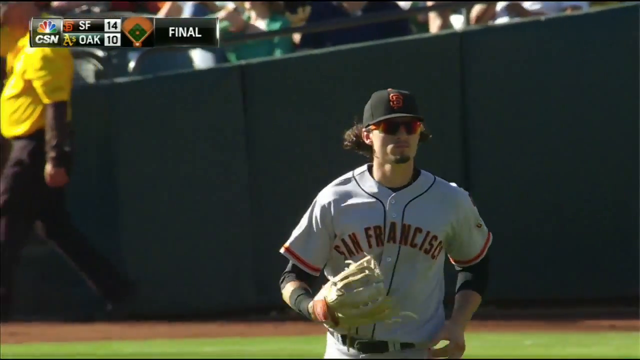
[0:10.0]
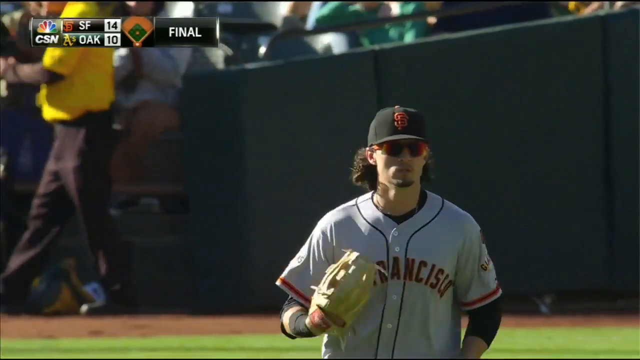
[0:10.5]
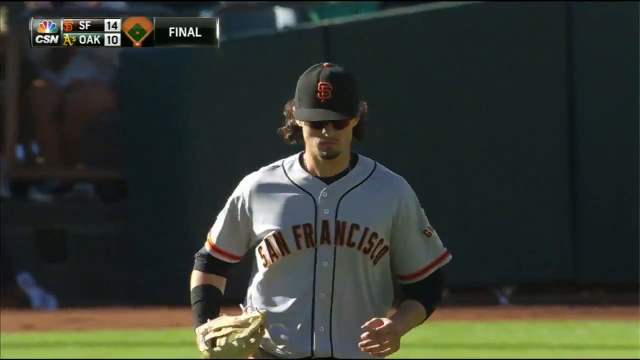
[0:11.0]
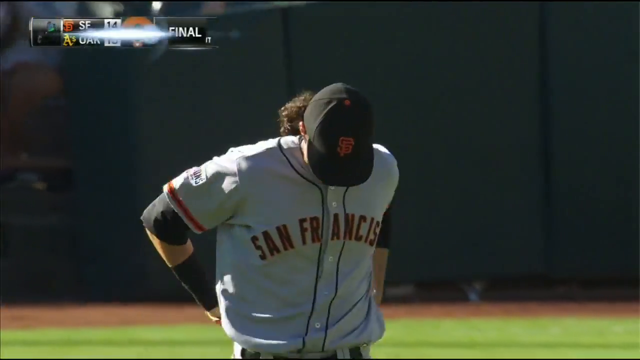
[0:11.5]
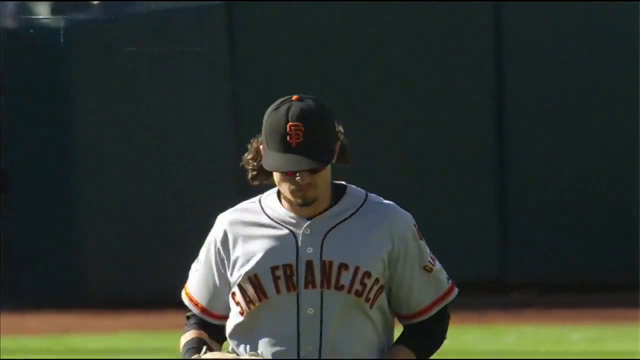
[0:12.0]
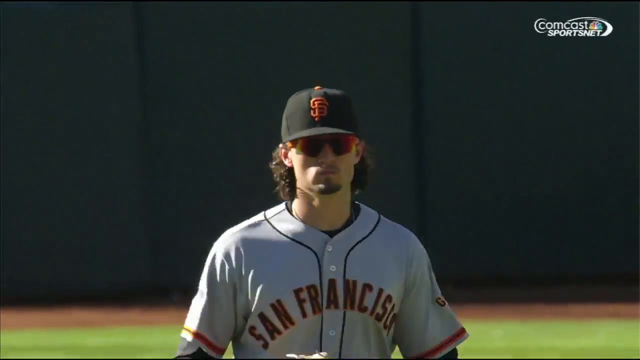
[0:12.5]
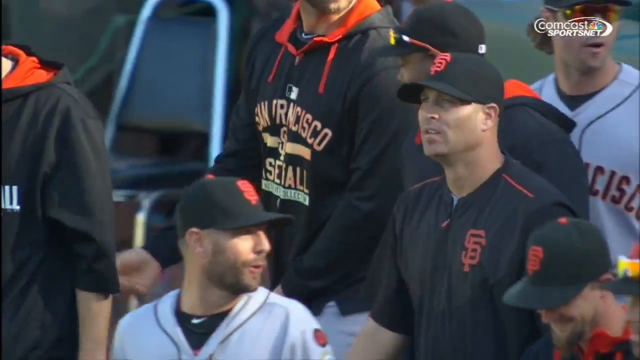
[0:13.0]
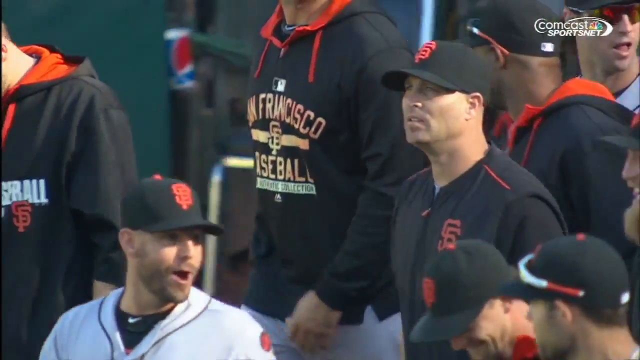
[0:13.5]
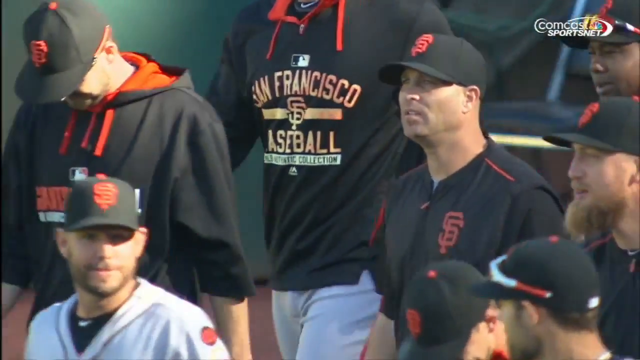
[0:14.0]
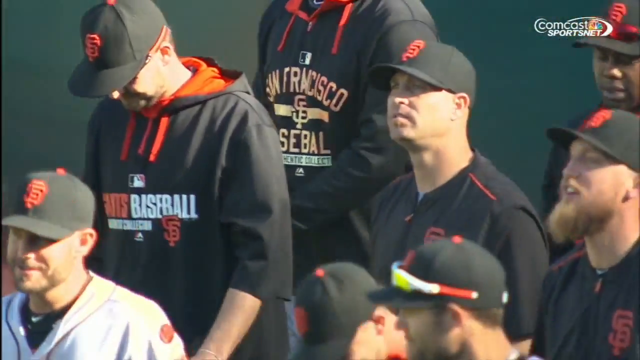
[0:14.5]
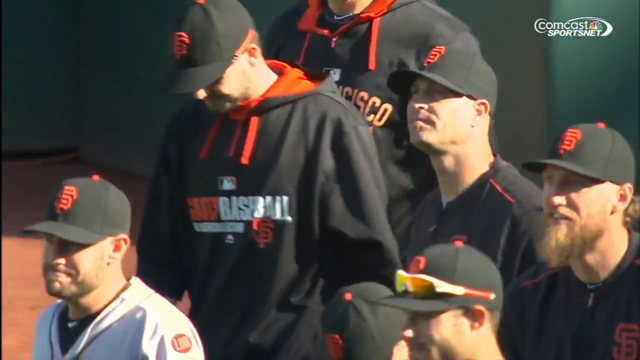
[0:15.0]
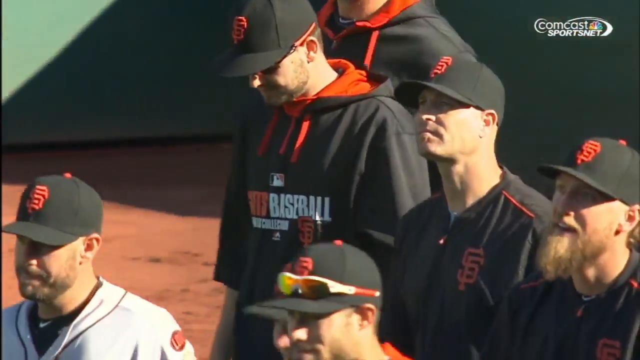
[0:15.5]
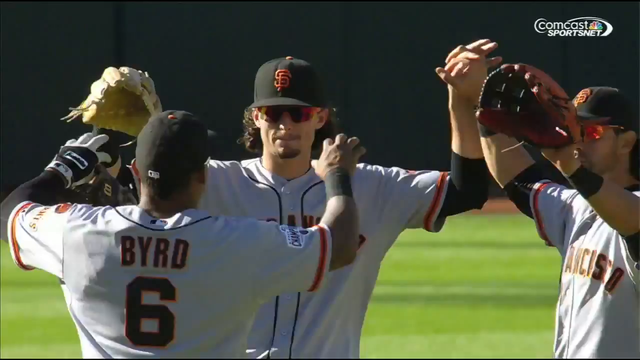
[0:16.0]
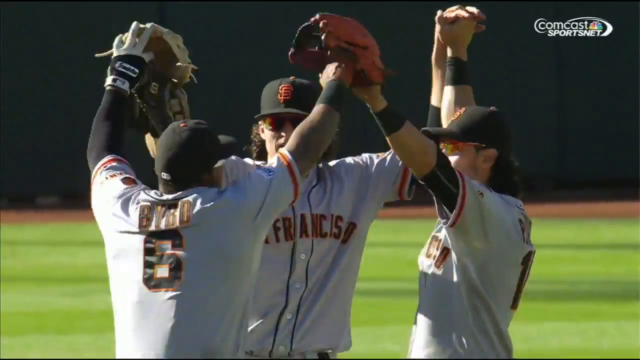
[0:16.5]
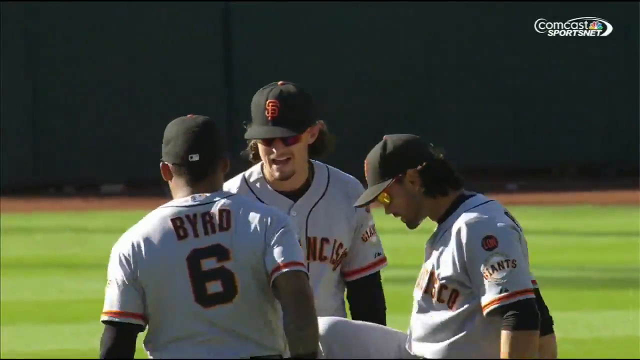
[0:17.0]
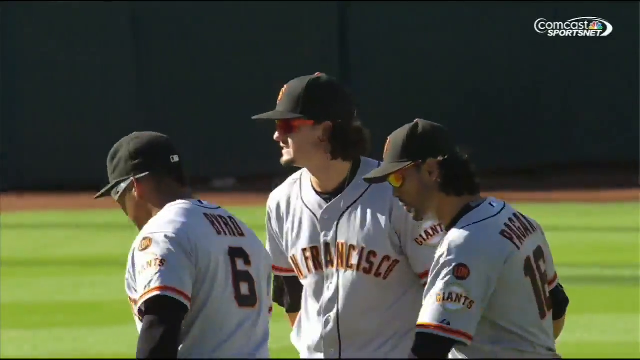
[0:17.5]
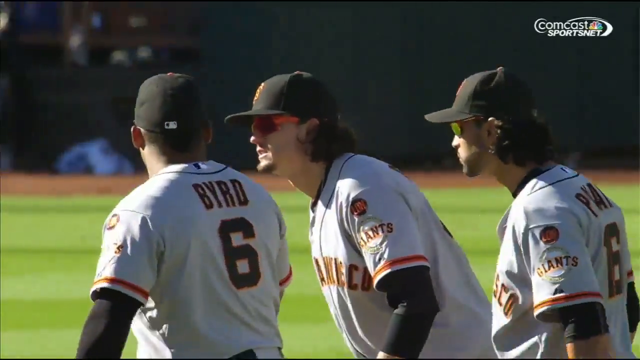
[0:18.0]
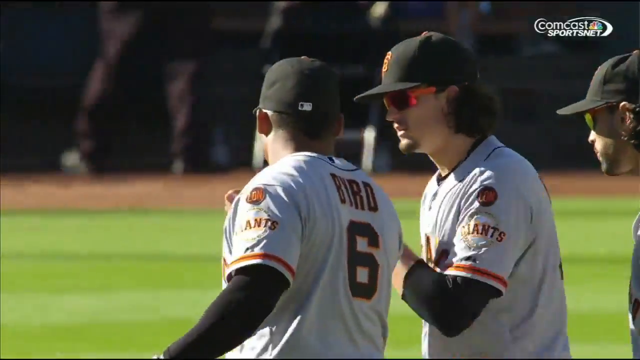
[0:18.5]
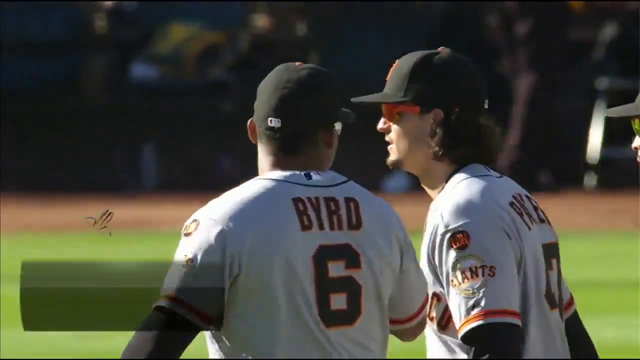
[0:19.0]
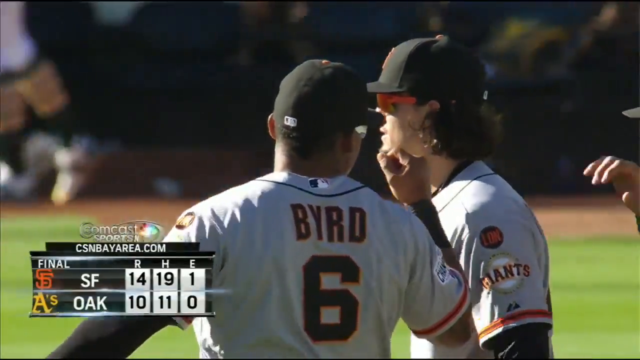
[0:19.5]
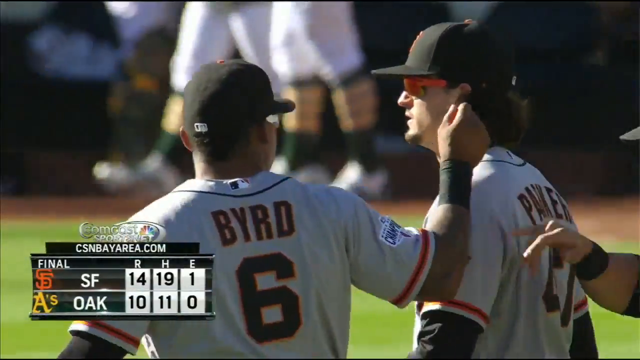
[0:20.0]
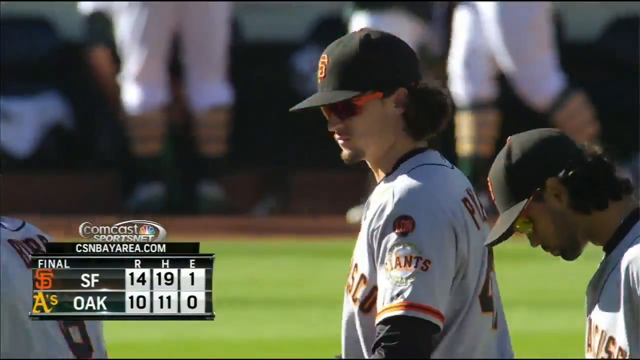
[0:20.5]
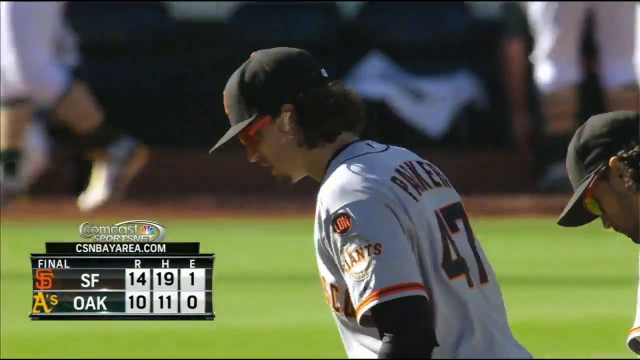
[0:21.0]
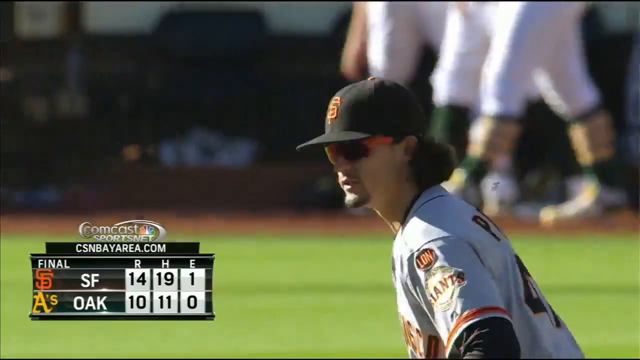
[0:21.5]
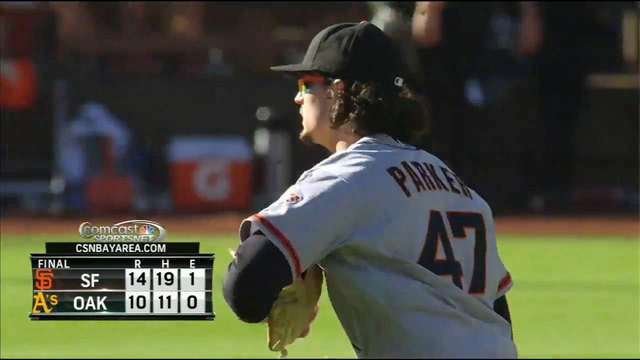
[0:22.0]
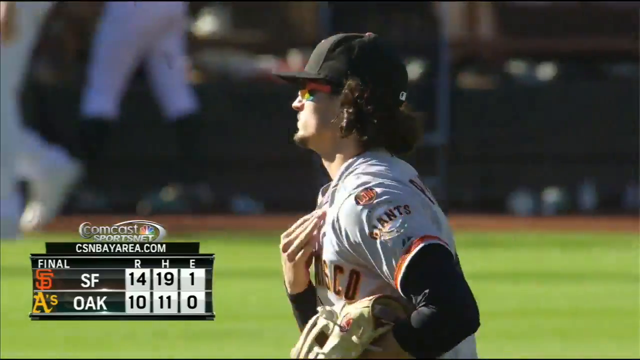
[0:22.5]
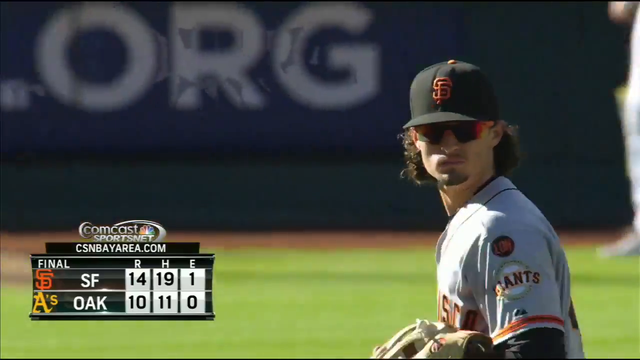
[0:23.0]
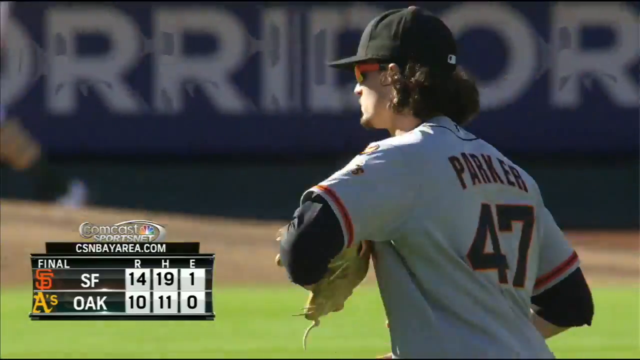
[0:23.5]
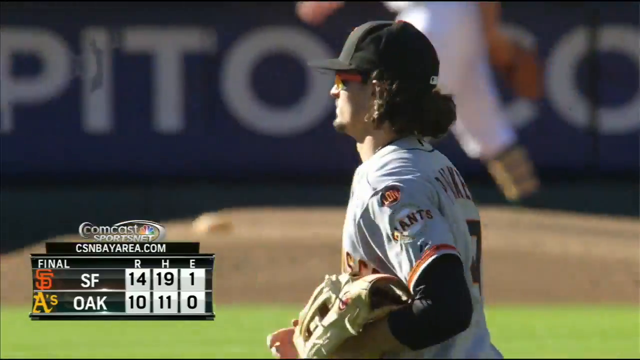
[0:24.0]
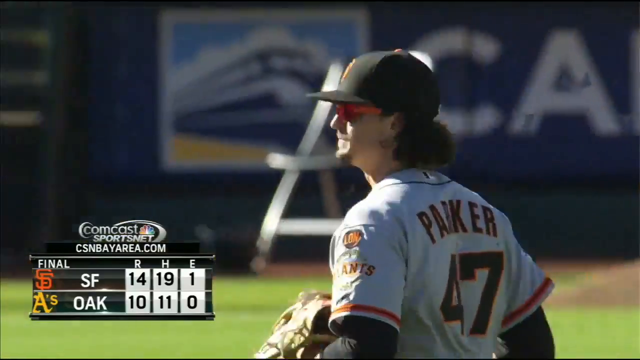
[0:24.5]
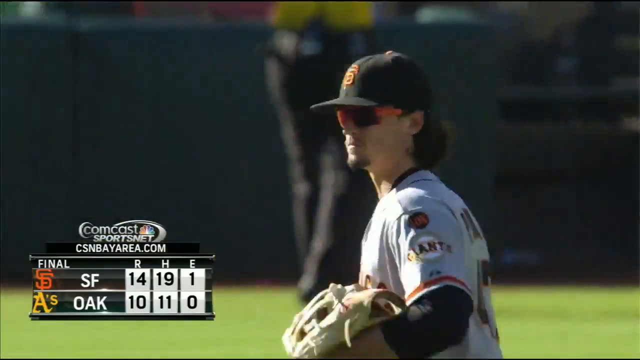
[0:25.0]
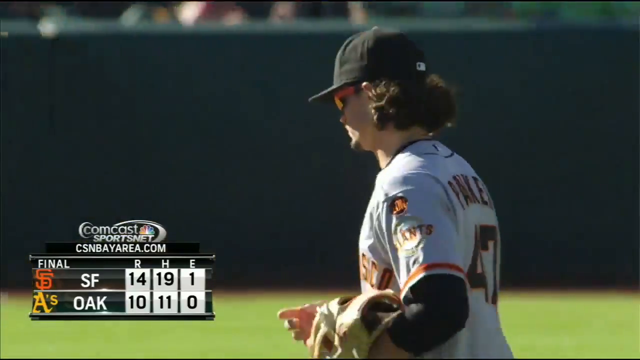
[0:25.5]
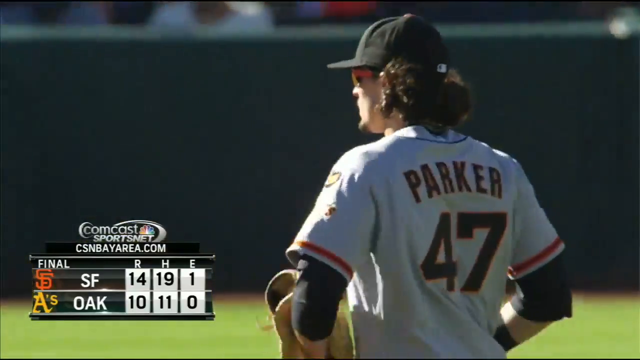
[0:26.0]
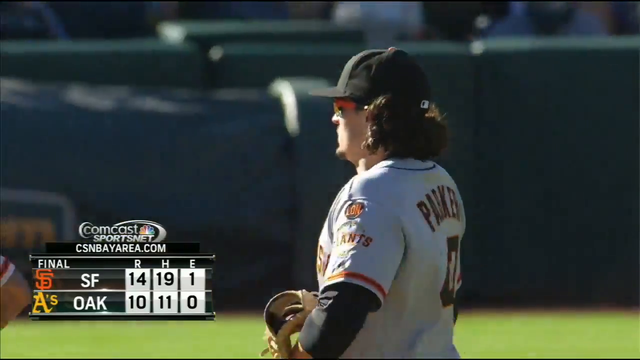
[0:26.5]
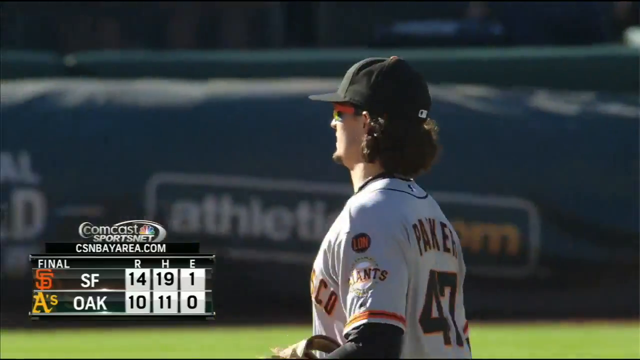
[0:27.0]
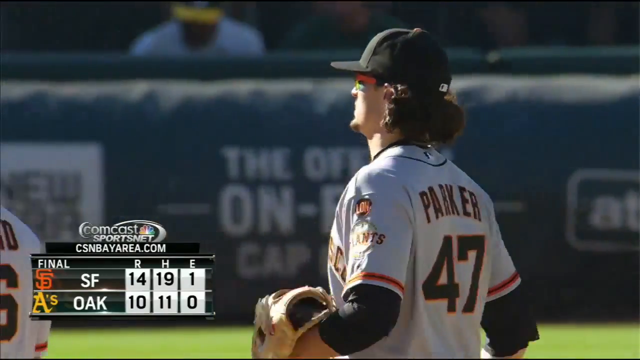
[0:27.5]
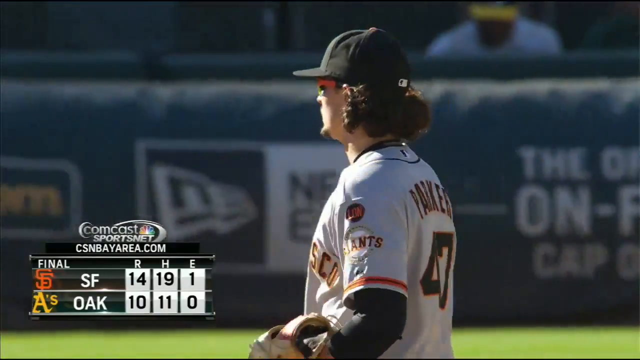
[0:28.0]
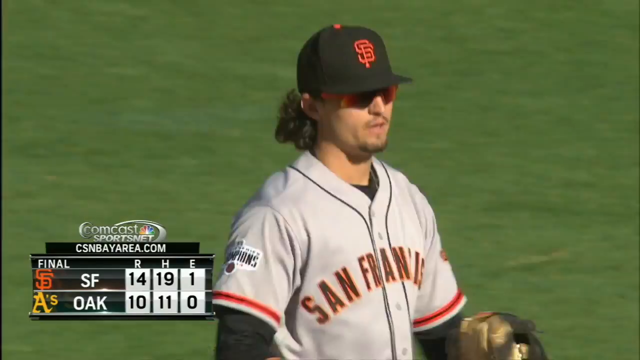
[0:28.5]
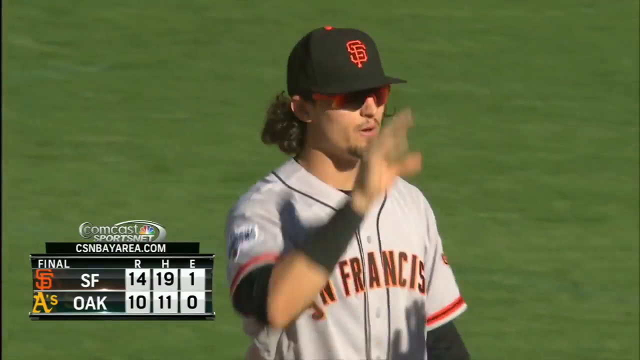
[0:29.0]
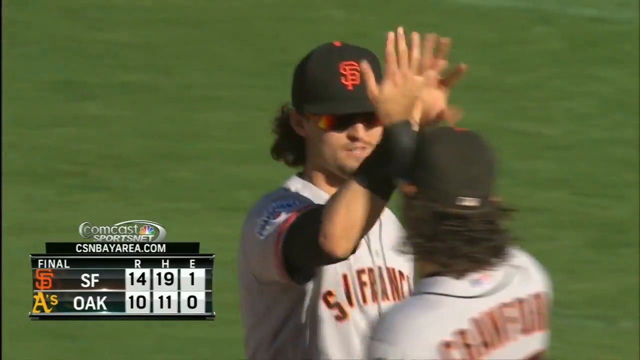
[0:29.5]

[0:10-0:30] The game between the San Francisco and Oakland baseball teams continues. An outfielder wearing a black hat with a red insignia and red-rimmed sunglasses seems to be a San Francisco player. He looks like he caught the ball, and he comes in to get congratulations from his team and probably from his coach and the side staff. He looks pretty happy, and the players all run across the field to their positions. A pop-up appears in the lower left showing the current scores, hitting ratios, batters, swings and outs, or some other statistics for the game. Everybody apparently goes to their positions, and at the top the screen reads "14 to 10" and "final", seemingly marking the end of the game as the players line up.